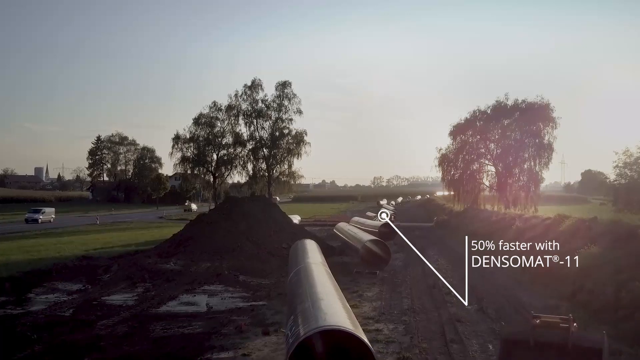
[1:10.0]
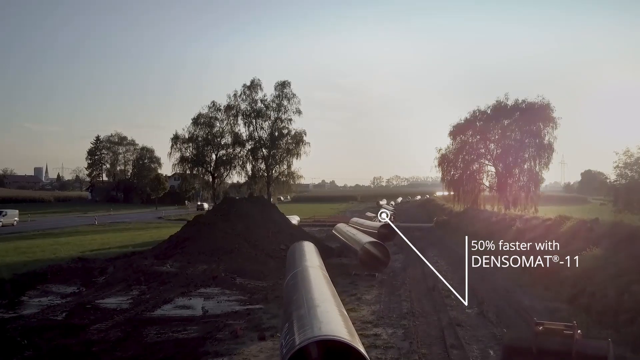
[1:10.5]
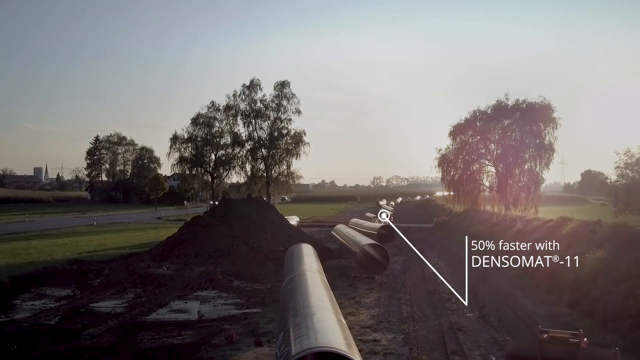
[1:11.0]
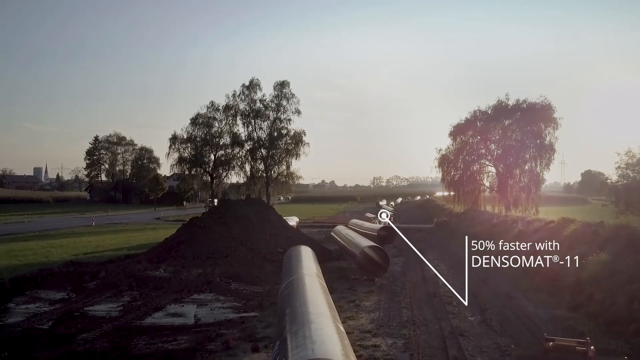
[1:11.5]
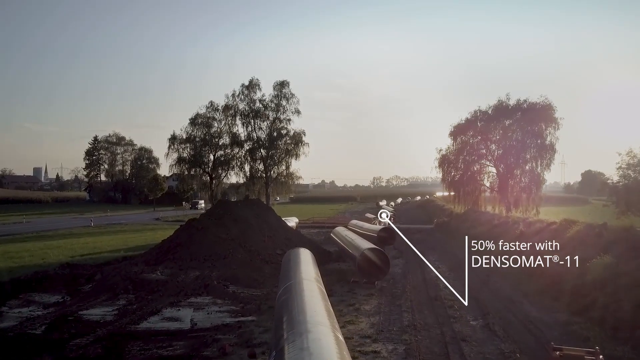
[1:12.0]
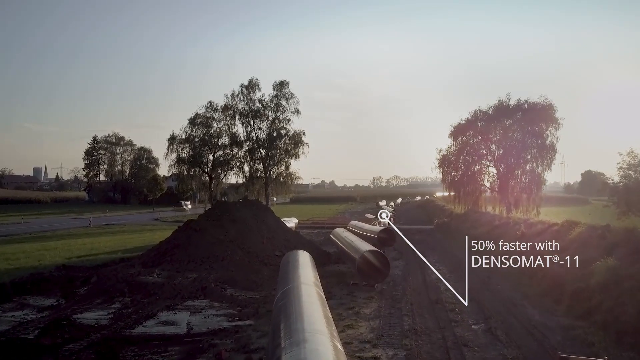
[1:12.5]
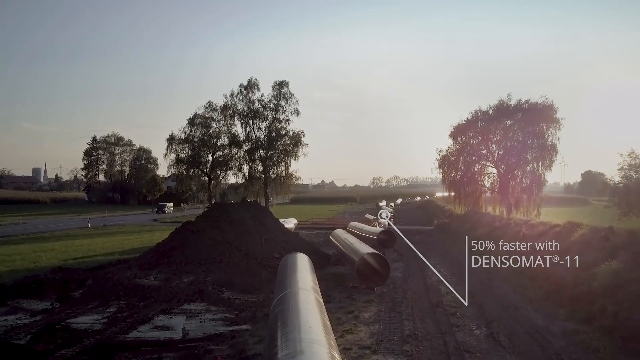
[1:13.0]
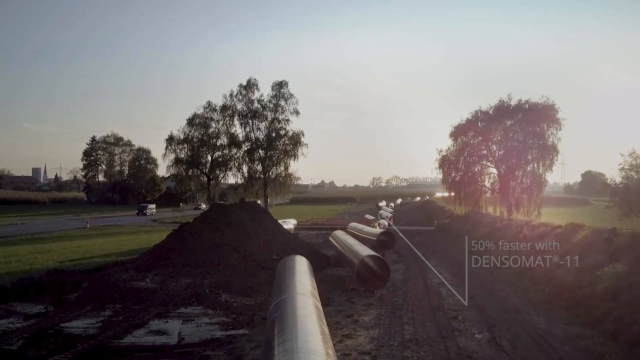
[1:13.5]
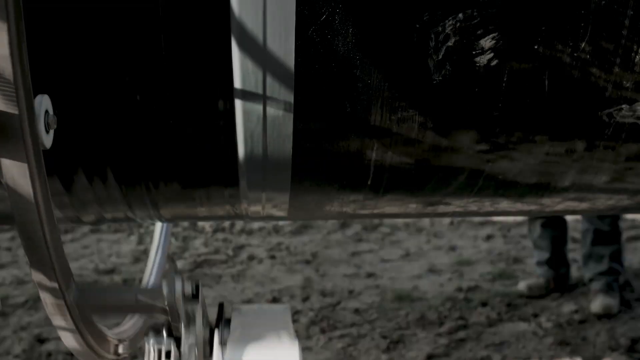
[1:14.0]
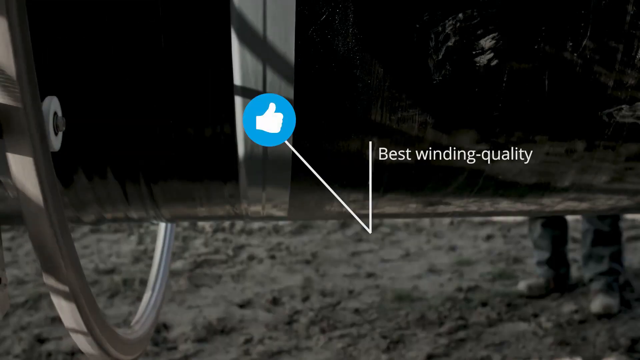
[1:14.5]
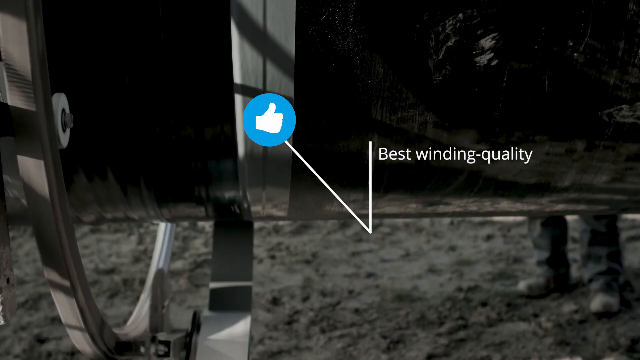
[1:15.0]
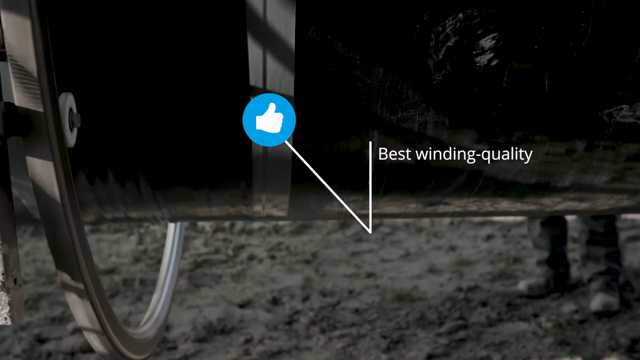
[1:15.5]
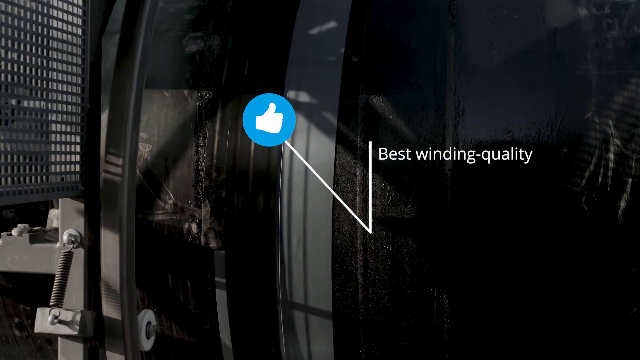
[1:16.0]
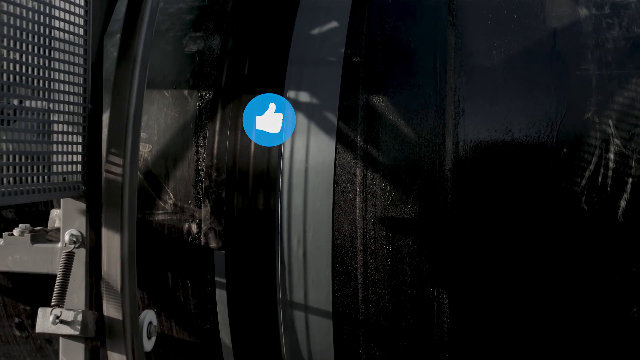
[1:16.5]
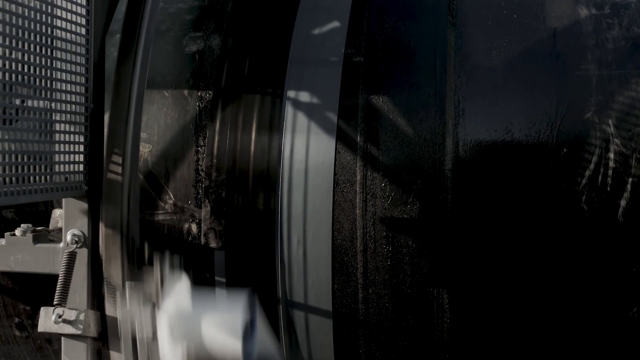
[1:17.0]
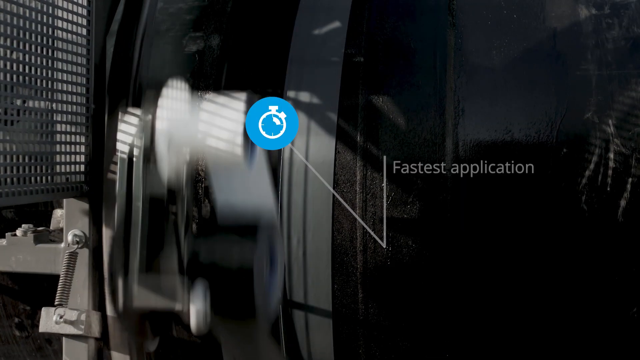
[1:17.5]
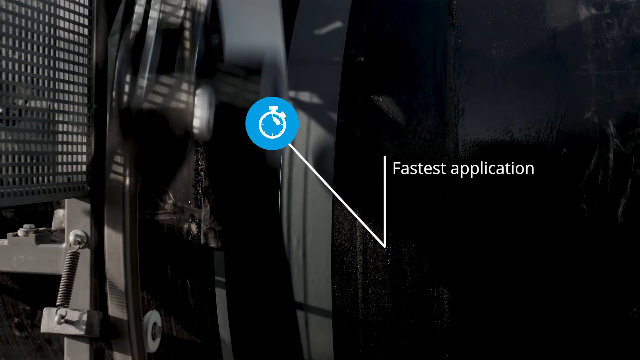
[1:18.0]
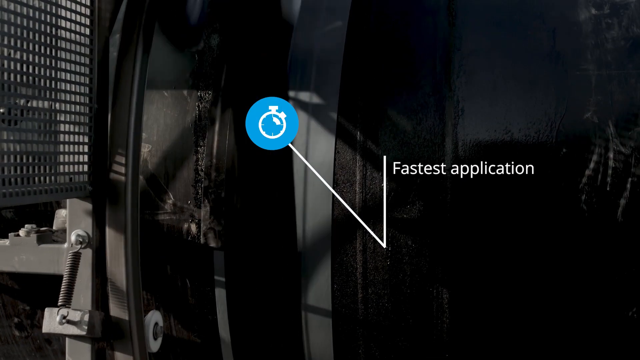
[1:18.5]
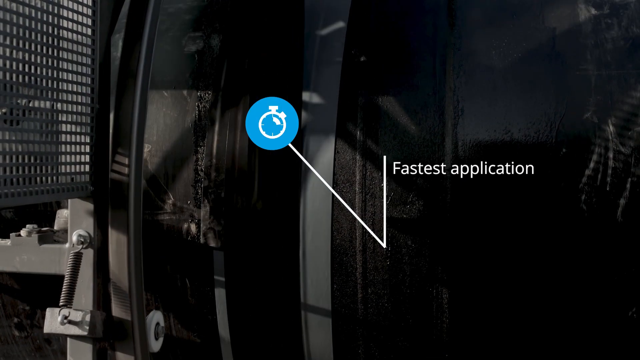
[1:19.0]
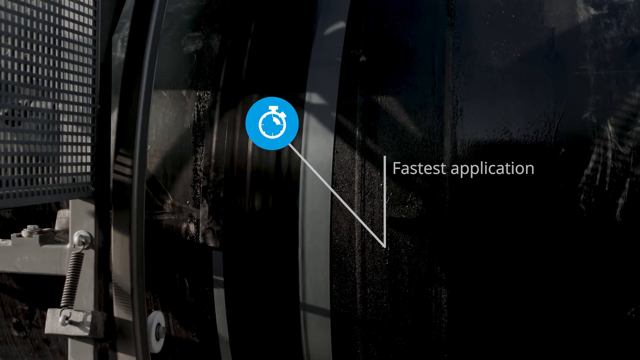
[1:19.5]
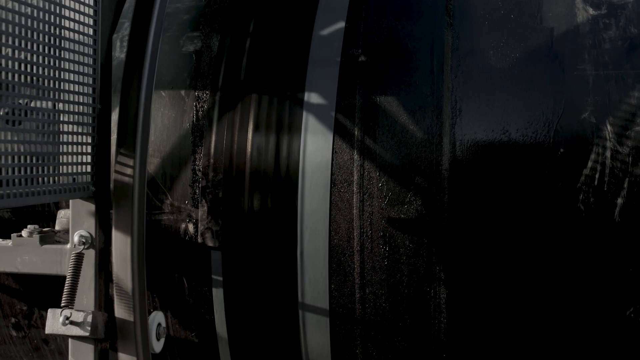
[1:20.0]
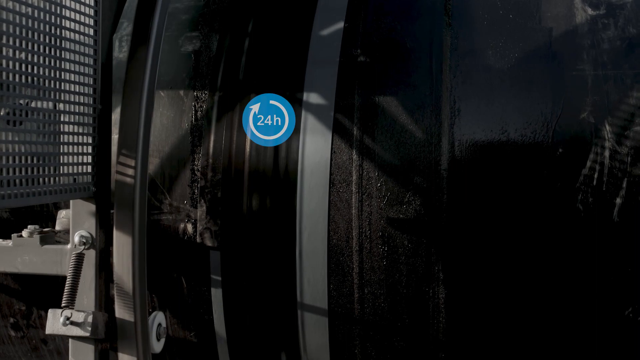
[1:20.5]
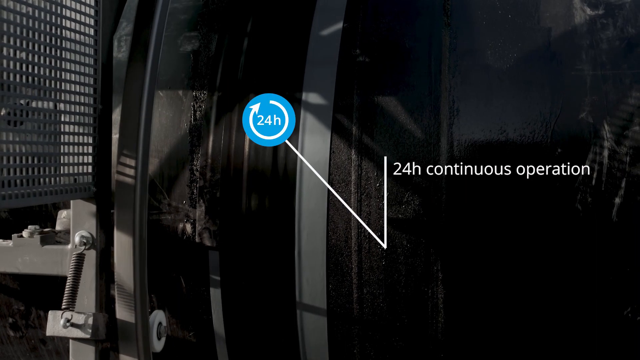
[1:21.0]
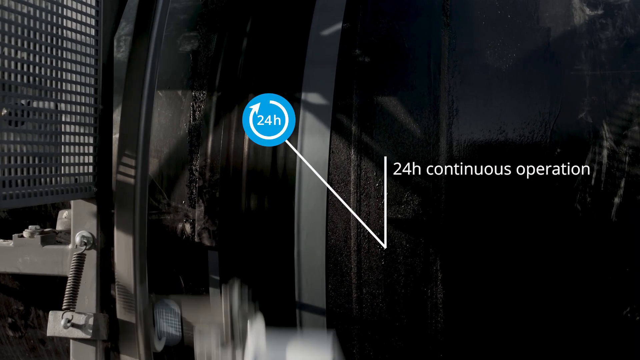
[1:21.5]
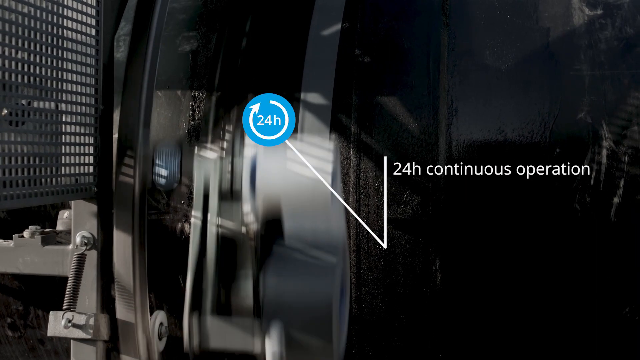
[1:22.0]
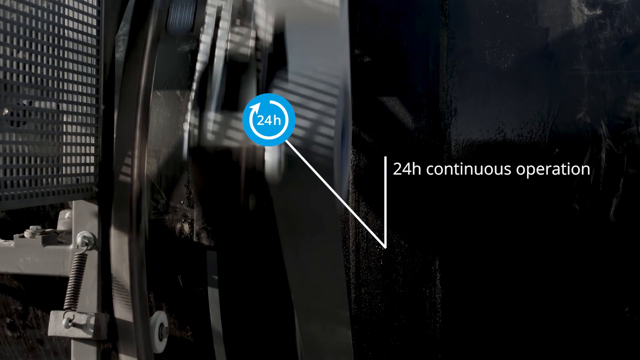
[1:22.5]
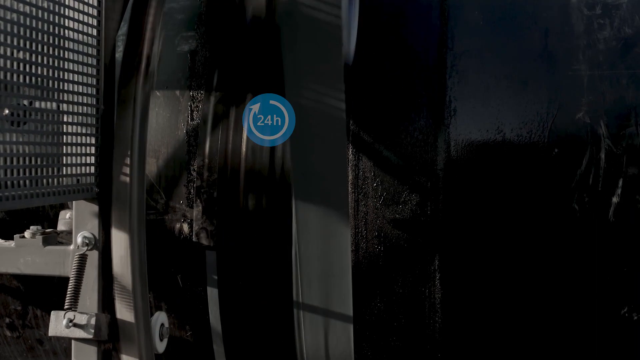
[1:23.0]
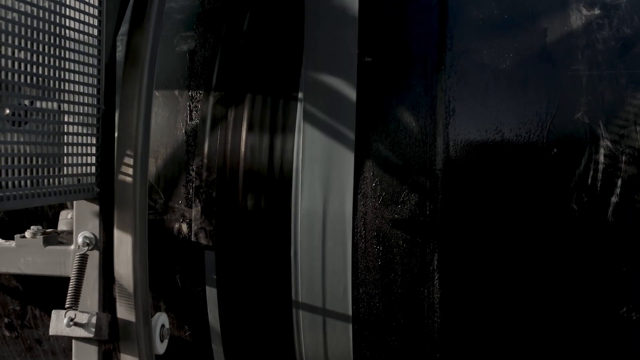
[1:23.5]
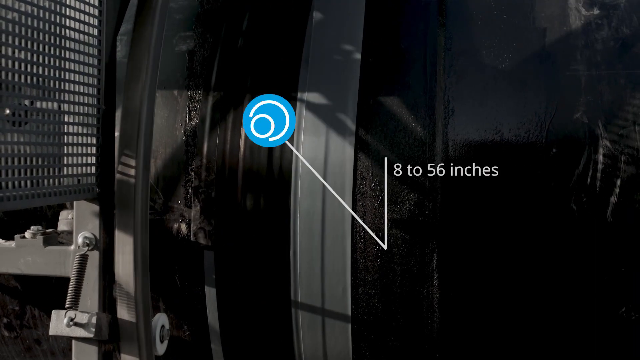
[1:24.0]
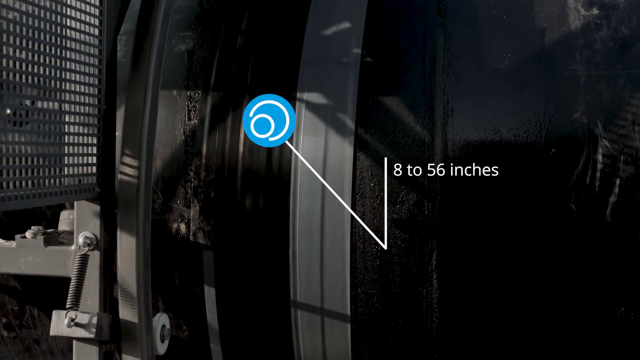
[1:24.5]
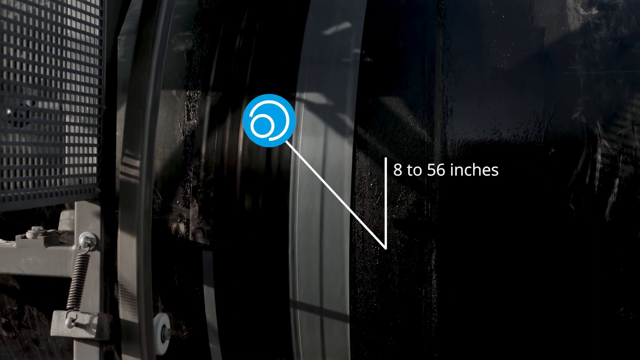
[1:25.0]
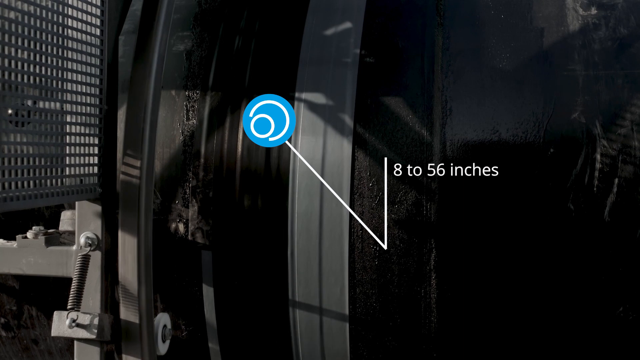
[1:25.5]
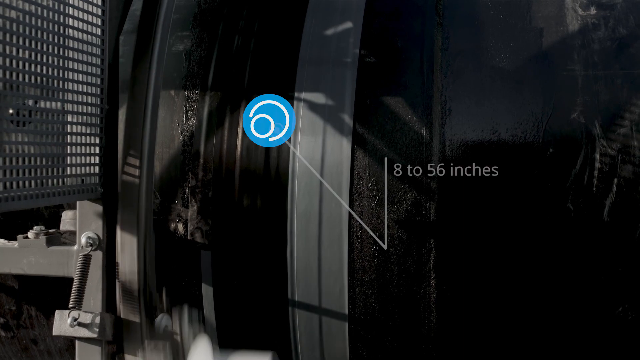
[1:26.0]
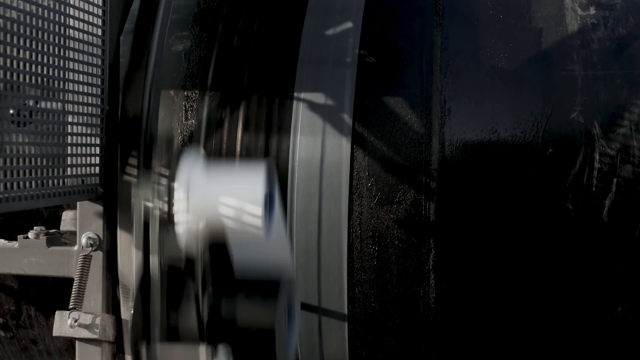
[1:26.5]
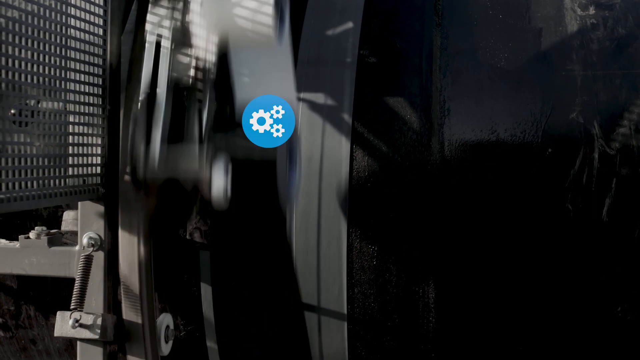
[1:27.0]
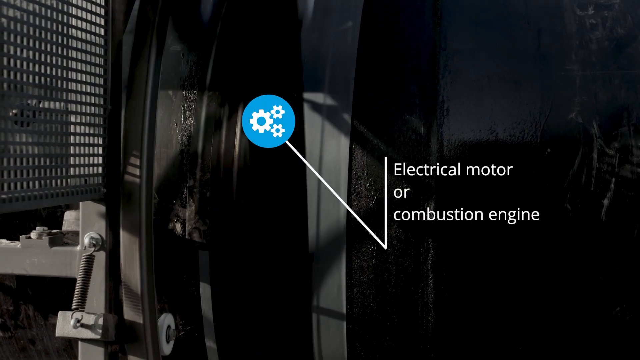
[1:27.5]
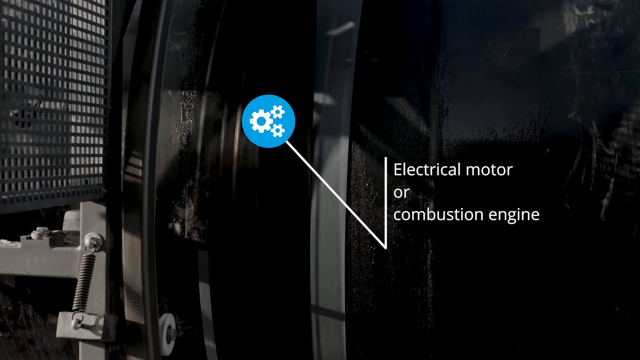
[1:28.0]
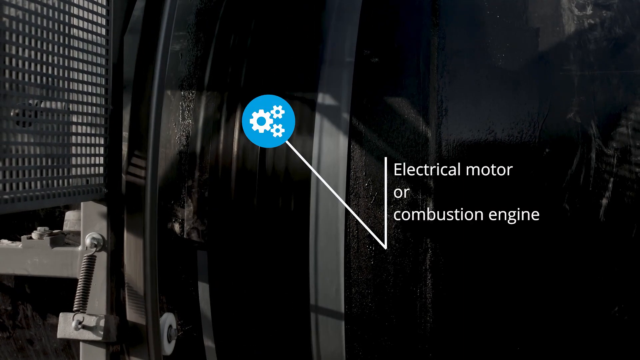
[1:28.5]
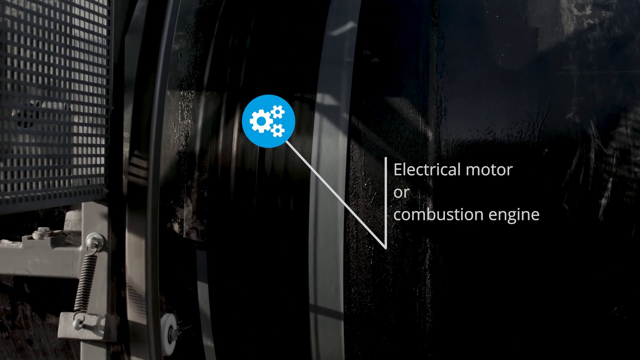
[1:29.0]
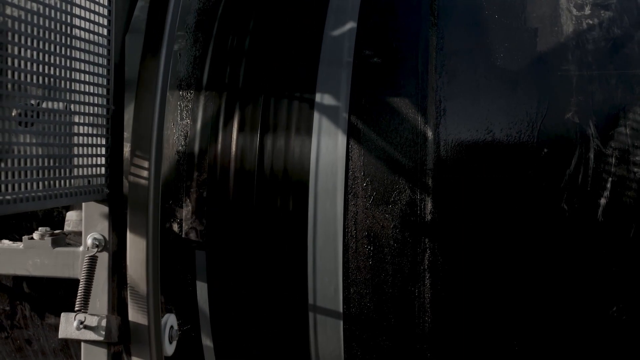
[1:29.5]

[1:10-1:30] A pipeline is being laid down along the right side of a highway, and the mechanics of the process are shown. A blue circle with a white thumbs-up in the middle appears, along with a blue circle with a clock in the middle and the text "fastest application." Another blue circle contains a clockwise arrow with the text "24 hour continuous operation." Machines work in the background. Another blue pop-up says something about measurement. Another blue pop-up contains electrical and mechanical gears and reads "electrical motor or combustion engine," while wheels and gears rotate continuously behind it. Back at the highway, pipes lie in no particular order along the road, and a white line appears with the text "50% faster with DENSO MAT 11."